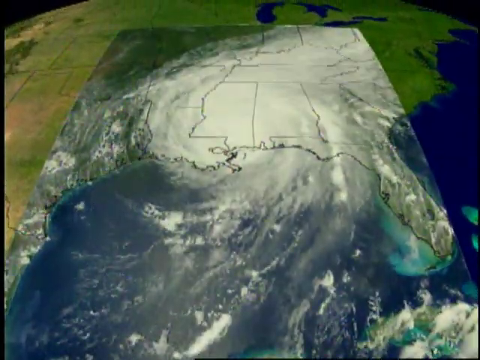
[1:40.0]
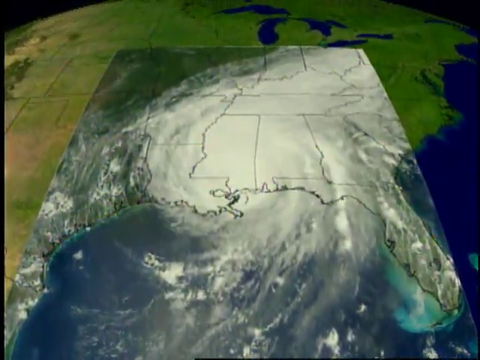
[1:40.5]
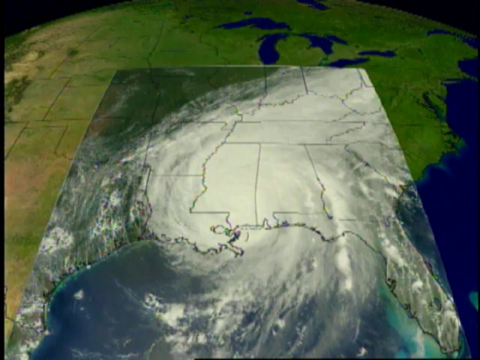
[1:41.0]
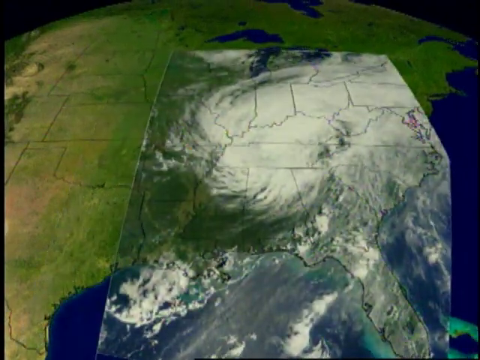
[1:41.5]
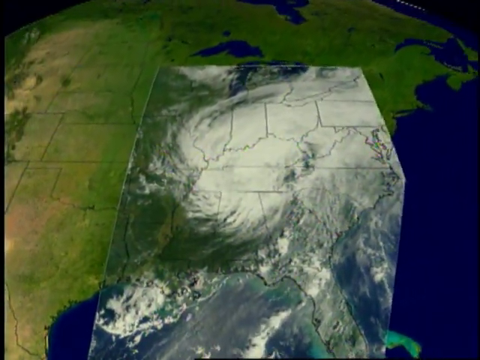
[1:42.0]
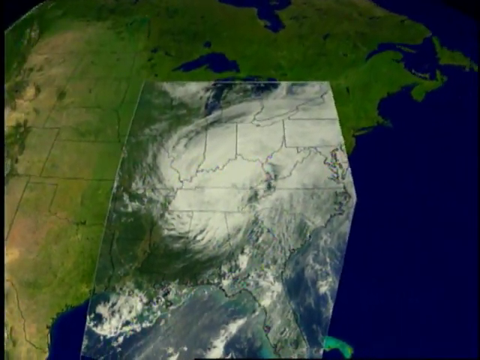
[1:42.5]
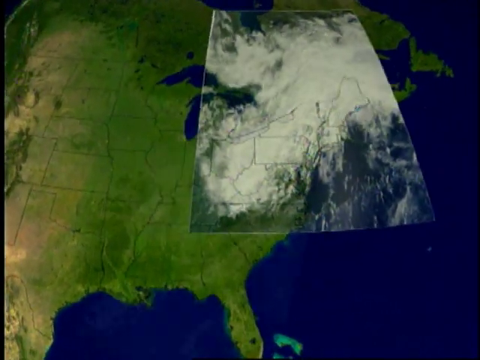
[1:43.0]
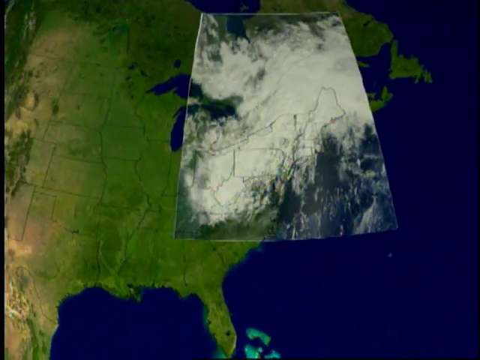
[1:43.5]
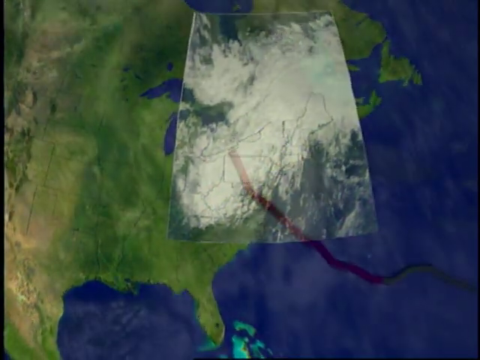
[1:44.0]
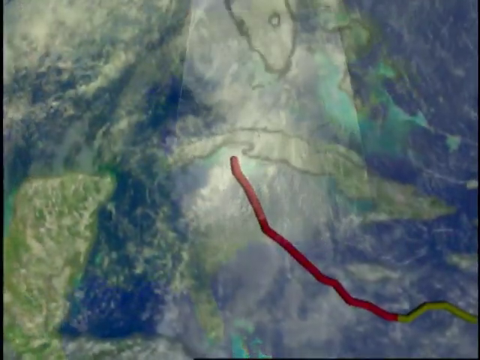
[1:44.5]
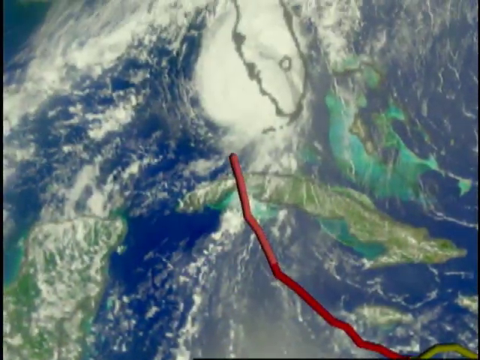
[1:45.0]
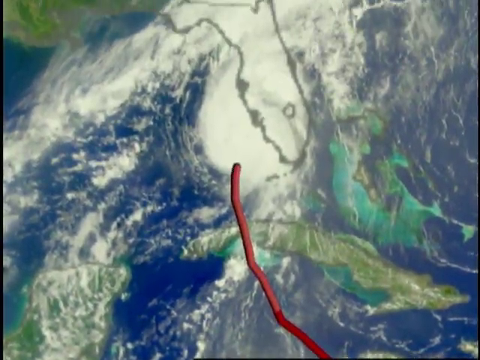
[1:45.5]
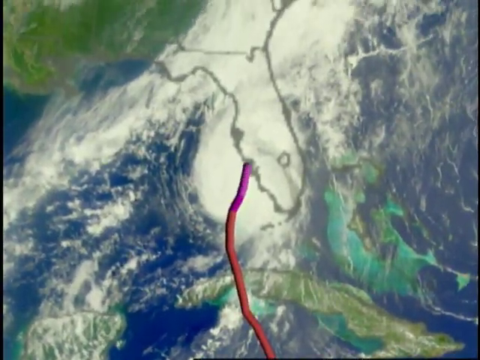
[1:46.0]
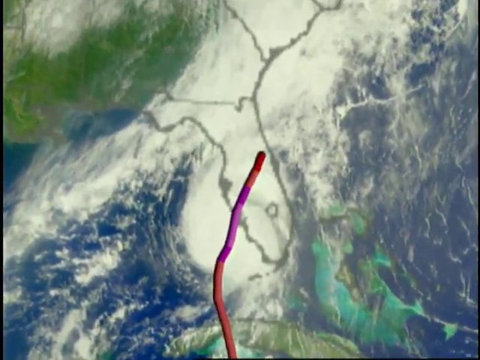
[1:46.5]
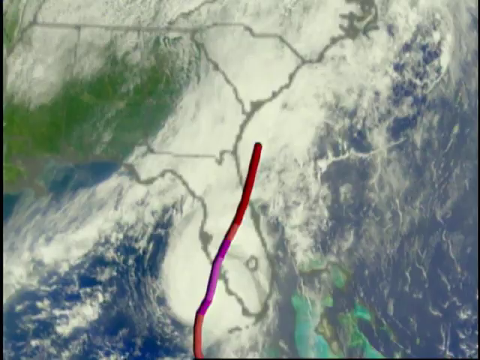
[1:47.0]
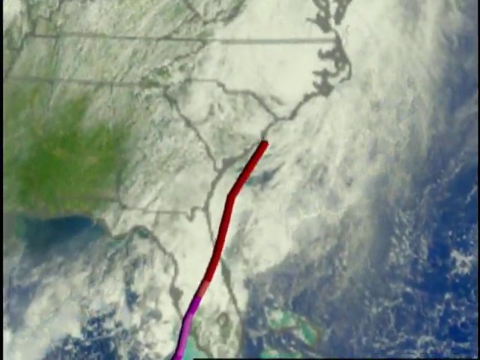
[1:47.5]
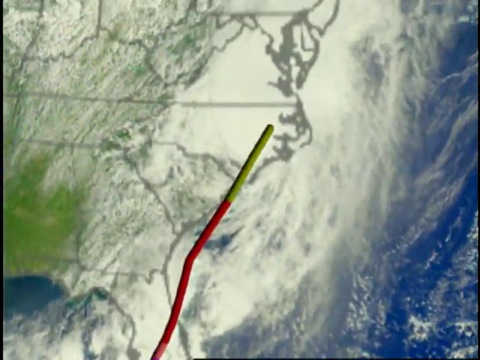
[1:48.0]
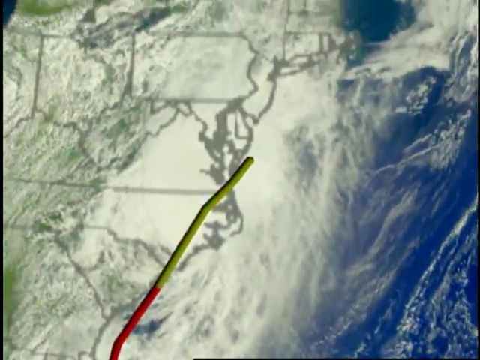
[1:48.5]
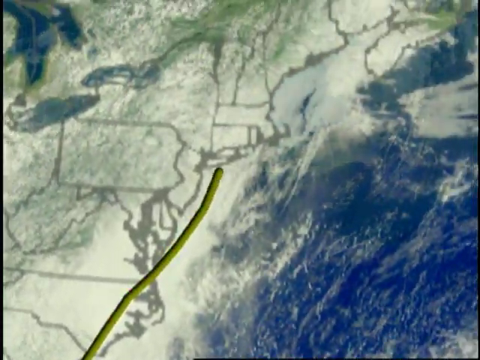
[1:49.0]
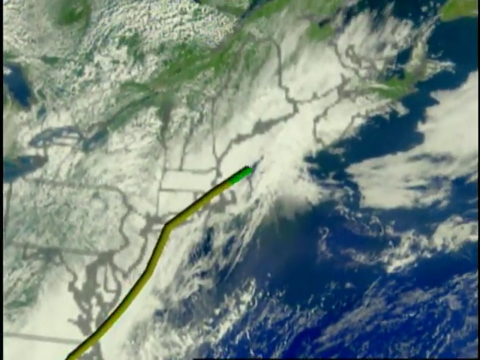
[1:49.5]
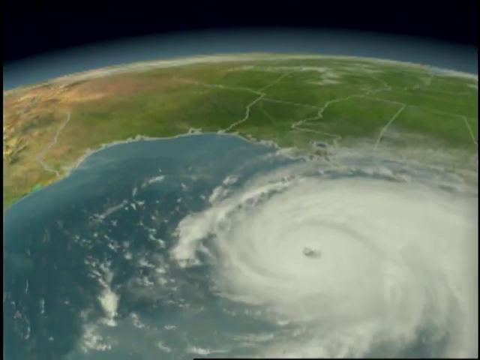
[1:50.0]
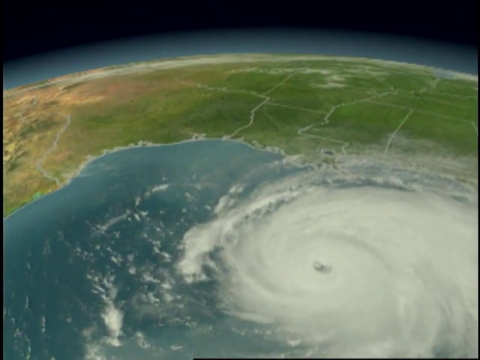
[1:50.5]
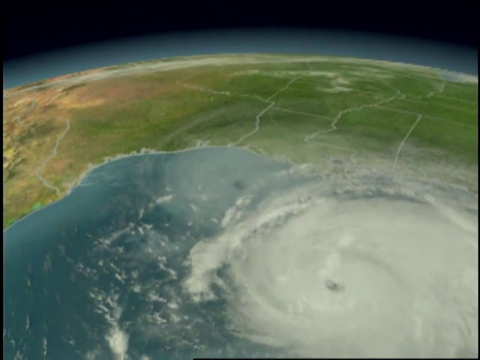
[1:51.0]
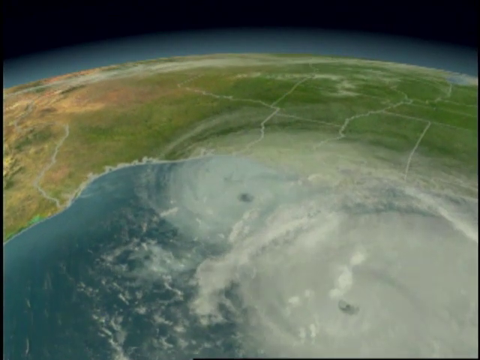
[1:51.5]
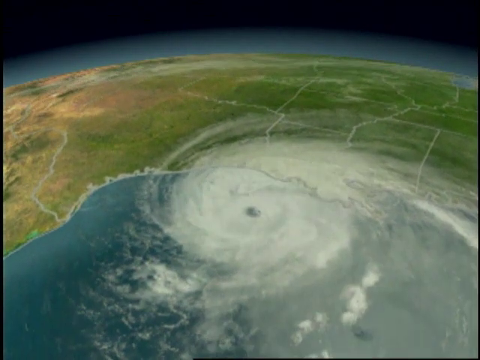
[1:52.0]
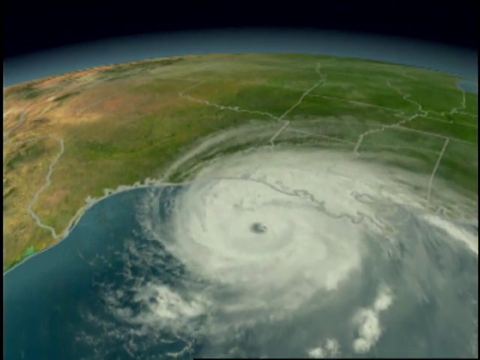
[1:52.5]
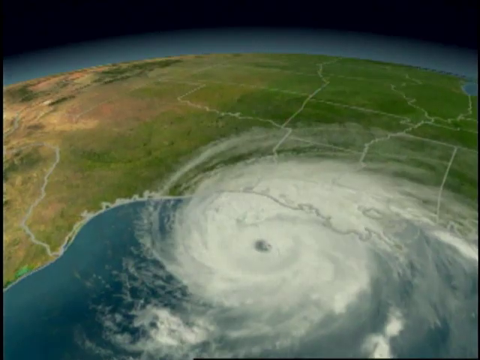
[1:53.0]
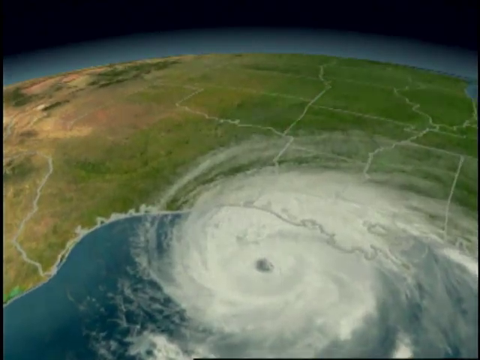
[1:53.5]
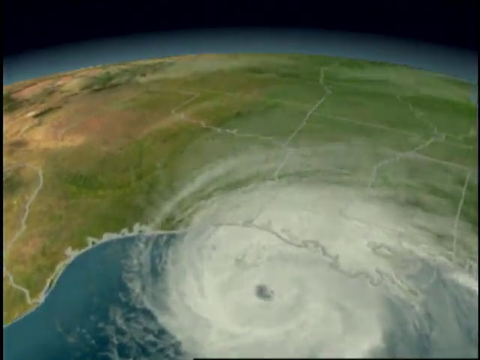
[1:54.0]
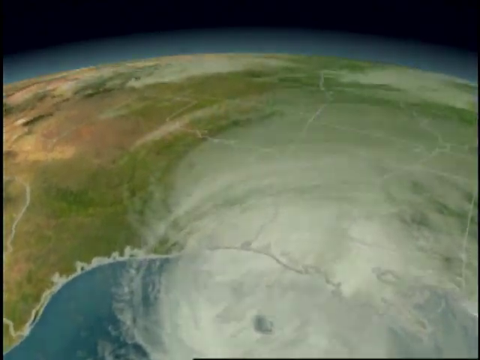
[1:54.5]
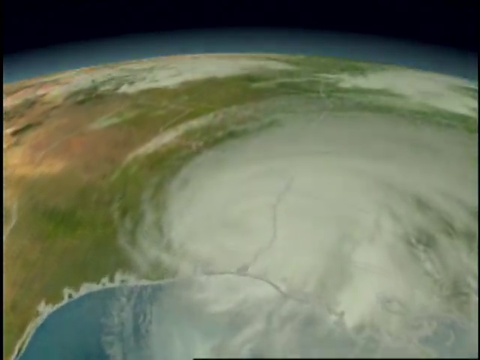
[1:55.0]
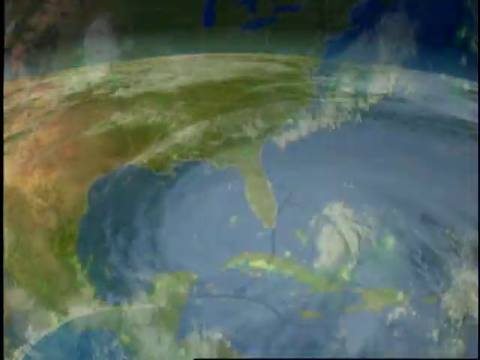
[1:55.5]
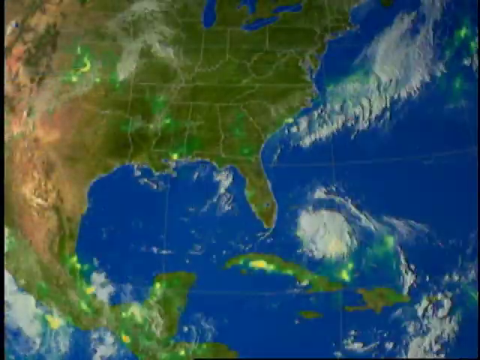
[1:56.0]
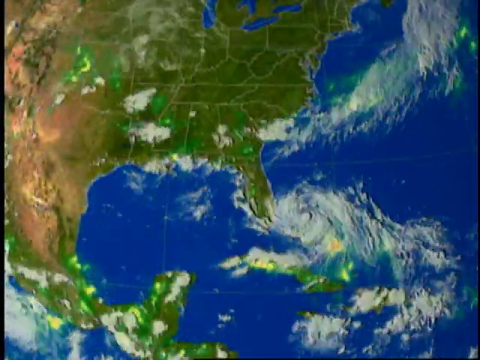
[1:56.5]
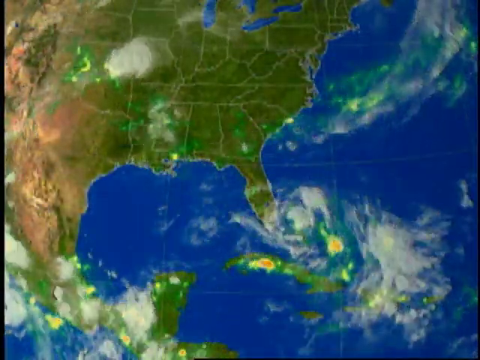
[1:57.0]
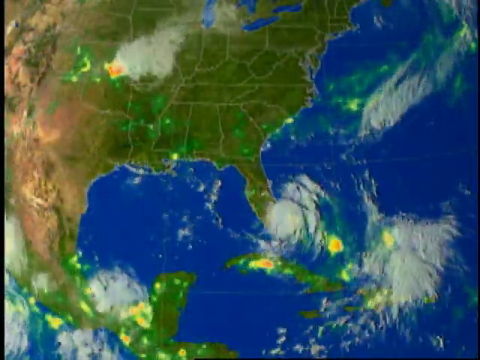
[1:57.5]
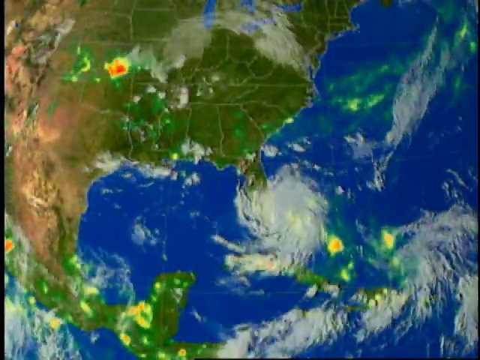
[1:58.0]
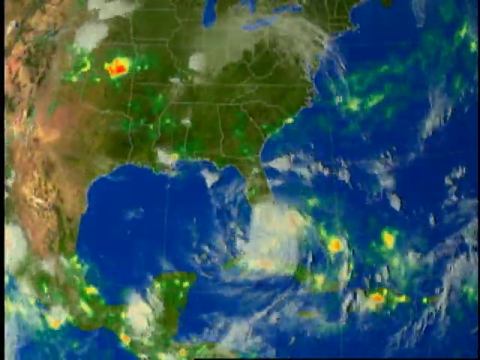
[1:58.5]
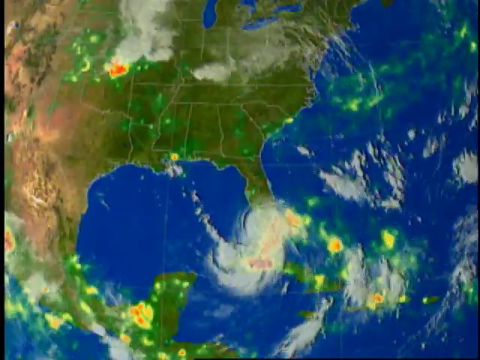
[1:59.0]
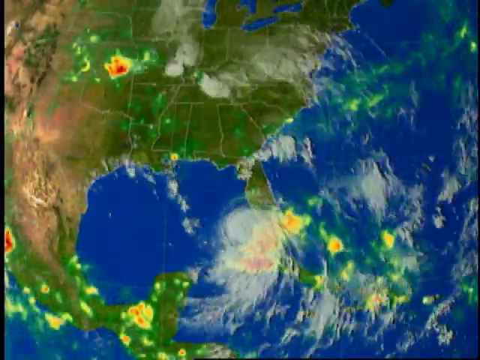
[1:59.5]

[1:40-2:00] A map of America shows Florida on the right and Oklahoma and Nevada on the left; California is not visible. The map sort of looks curved, as if on a globe. Many white clouds are over Florida, Louisiana and the southern states. The model moves up, and the clouds shift and move toward the east coast, up toward Maine and then off into Canada. Another image shows the tip of Florida, with a red line coming up from the bottom right toward the tip of Florida. It goes across Florida and up the east coast, turns green, and heads to Maine. Next, a computer image that looks like a satellite view shows a hurricane moving through the Gulf of America and up through the southern states. The view switches to a map of America with the states outlined: the eastern states, from the central states eastward, are green and the western states are brown. A bunch of clouds cover it, and part of the clouds spins like a hurricane over Florida.